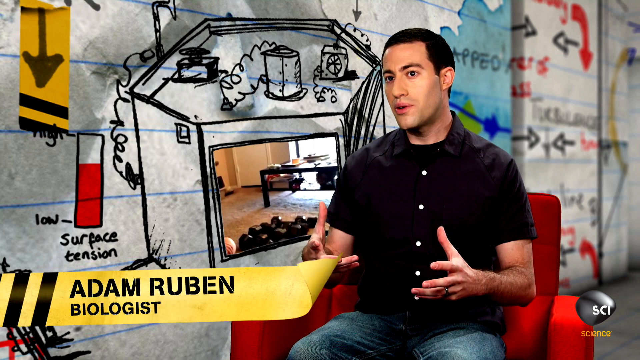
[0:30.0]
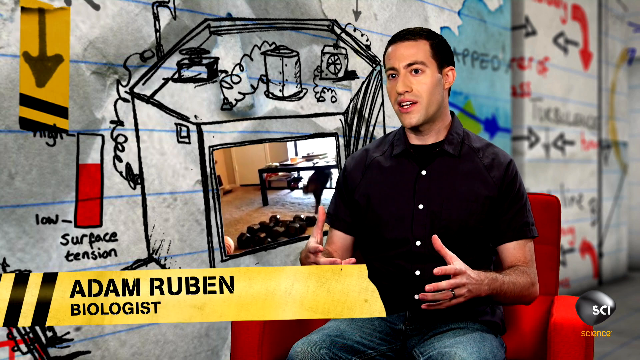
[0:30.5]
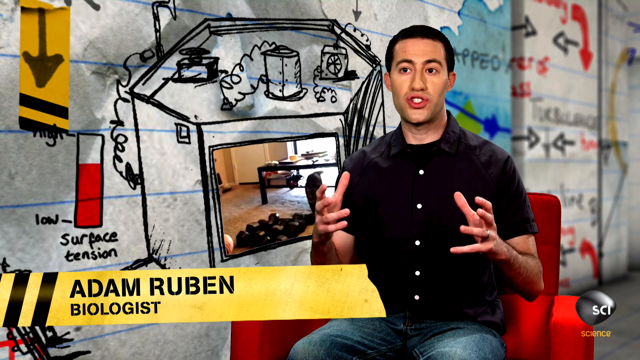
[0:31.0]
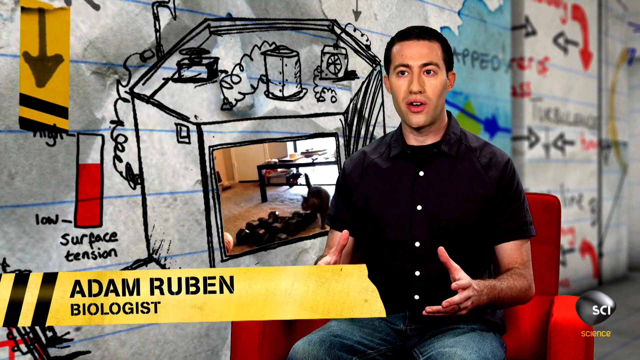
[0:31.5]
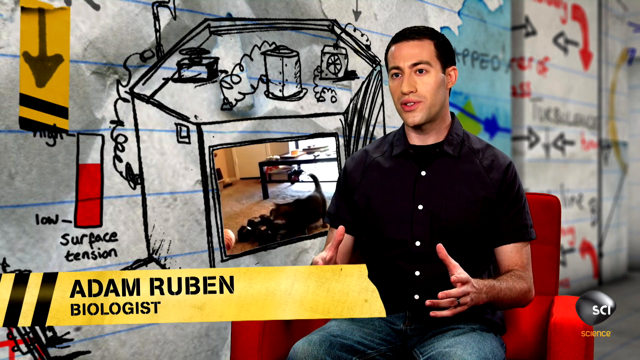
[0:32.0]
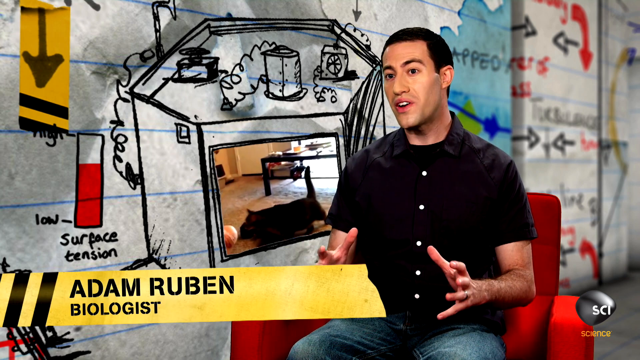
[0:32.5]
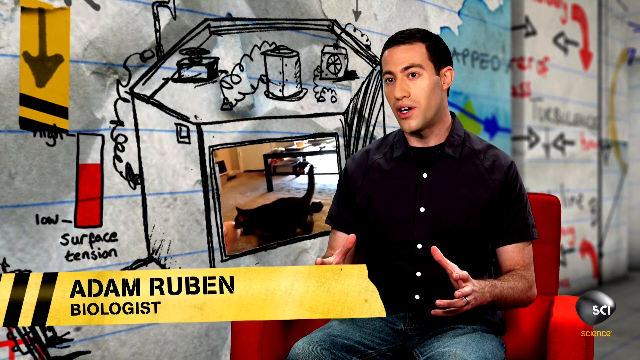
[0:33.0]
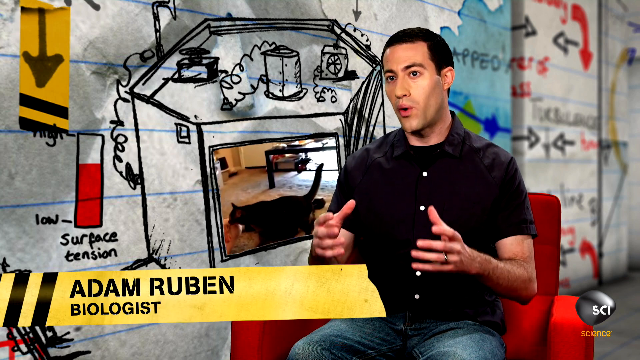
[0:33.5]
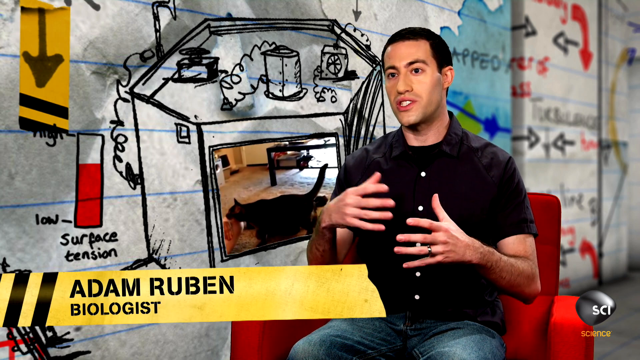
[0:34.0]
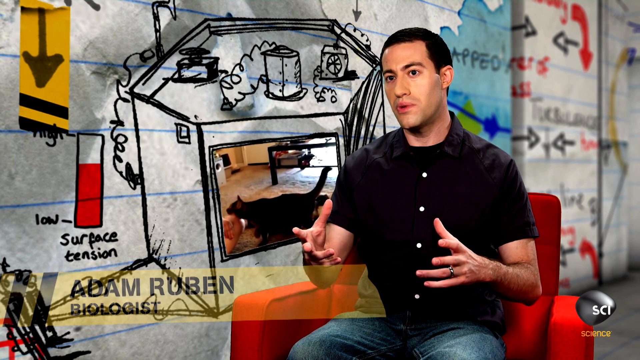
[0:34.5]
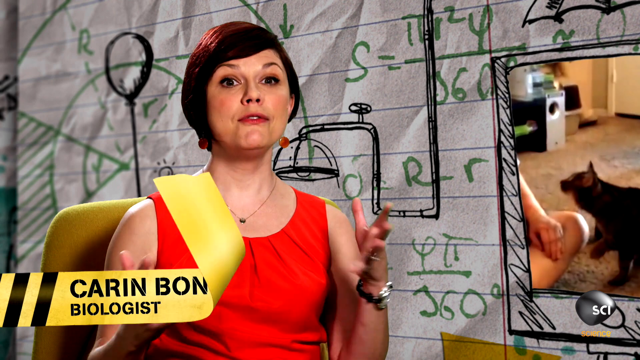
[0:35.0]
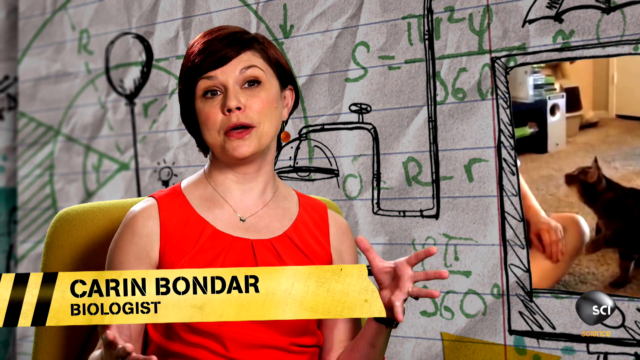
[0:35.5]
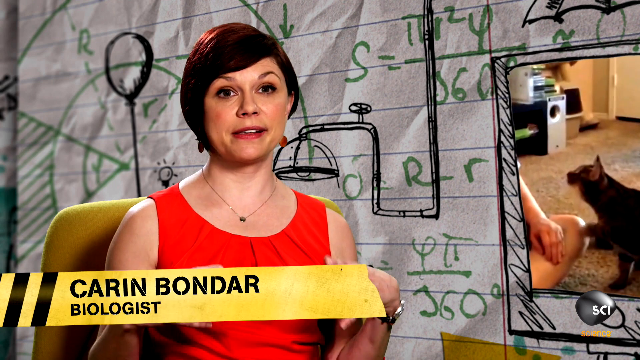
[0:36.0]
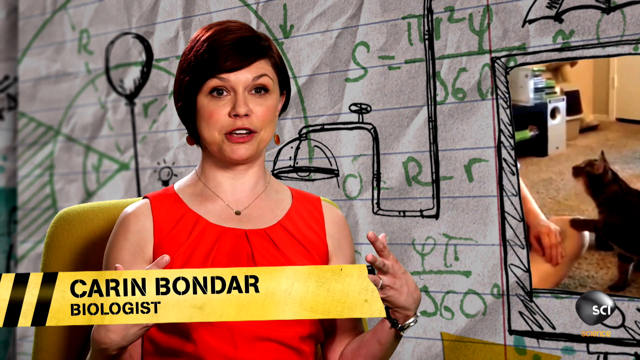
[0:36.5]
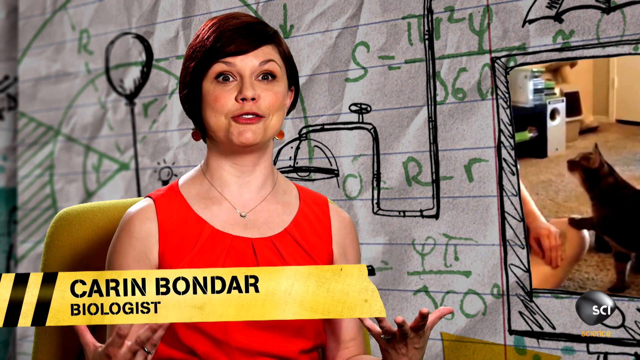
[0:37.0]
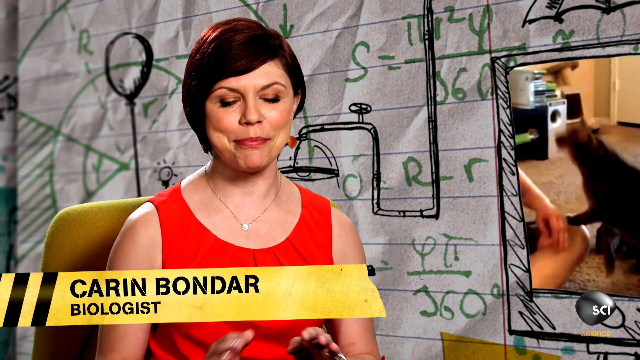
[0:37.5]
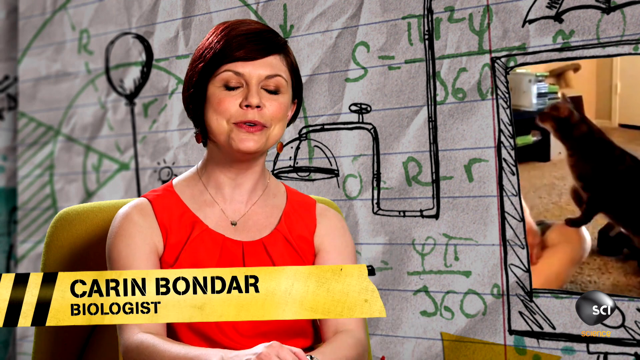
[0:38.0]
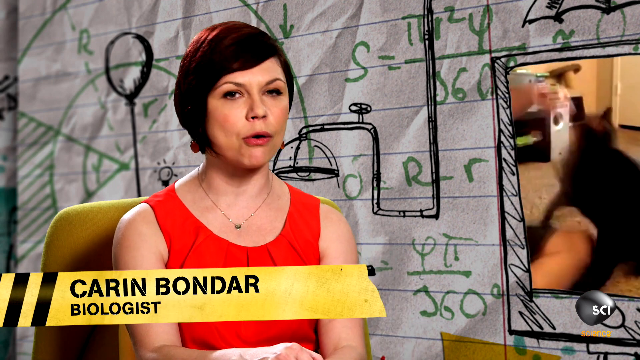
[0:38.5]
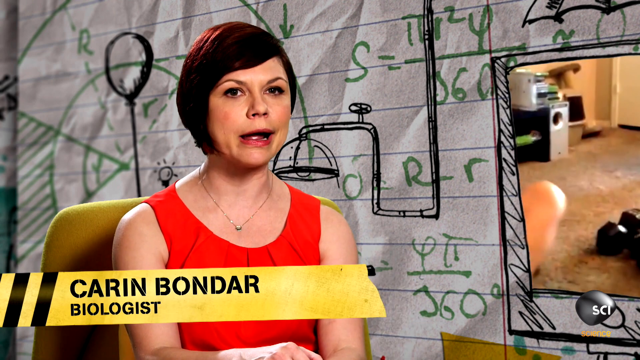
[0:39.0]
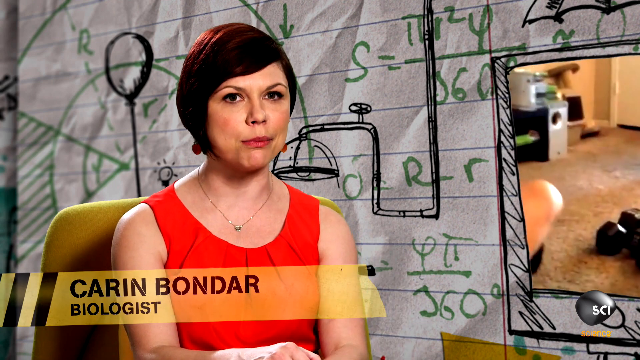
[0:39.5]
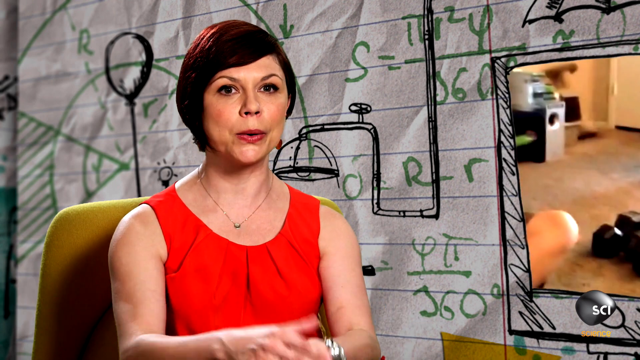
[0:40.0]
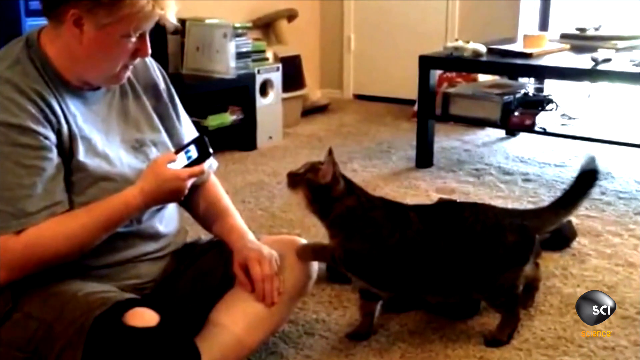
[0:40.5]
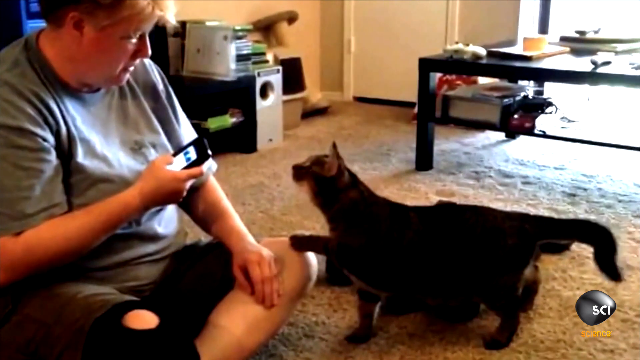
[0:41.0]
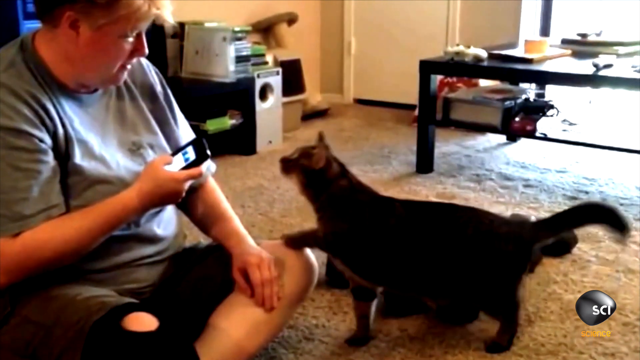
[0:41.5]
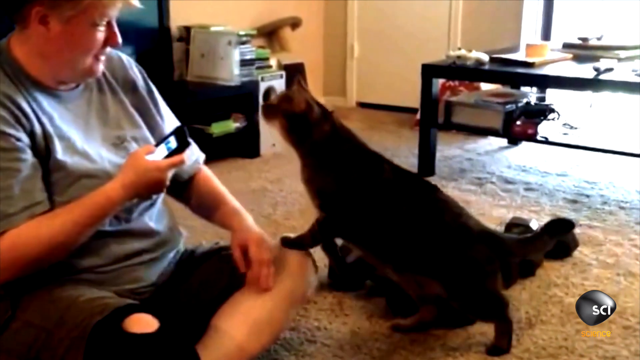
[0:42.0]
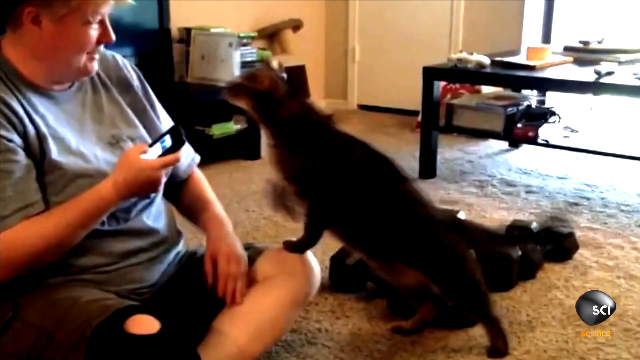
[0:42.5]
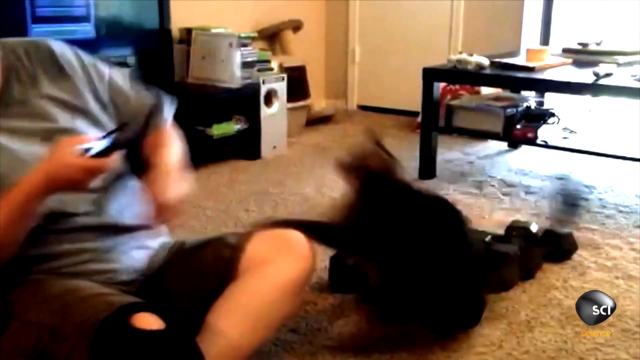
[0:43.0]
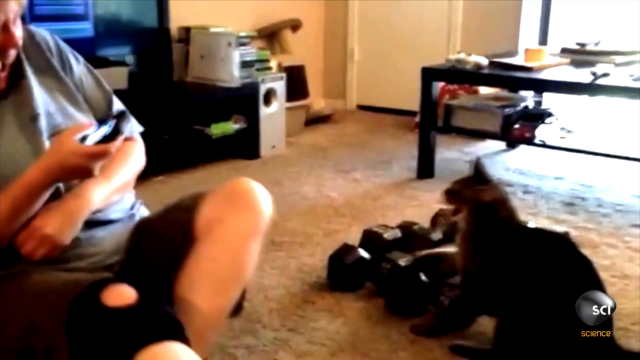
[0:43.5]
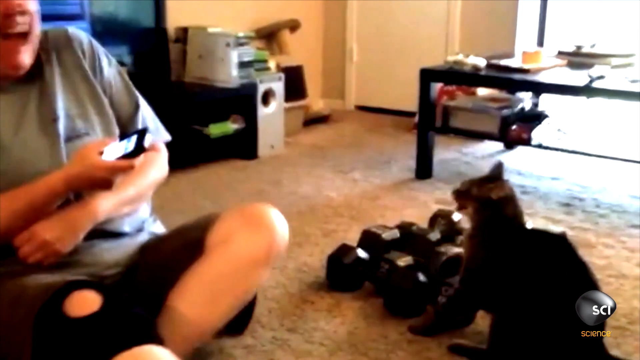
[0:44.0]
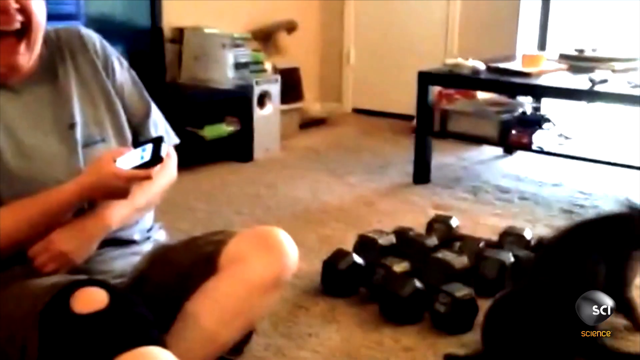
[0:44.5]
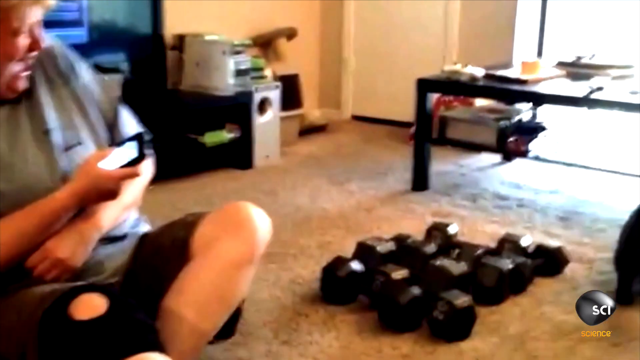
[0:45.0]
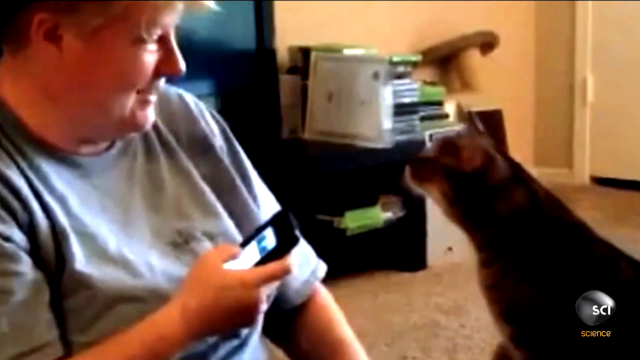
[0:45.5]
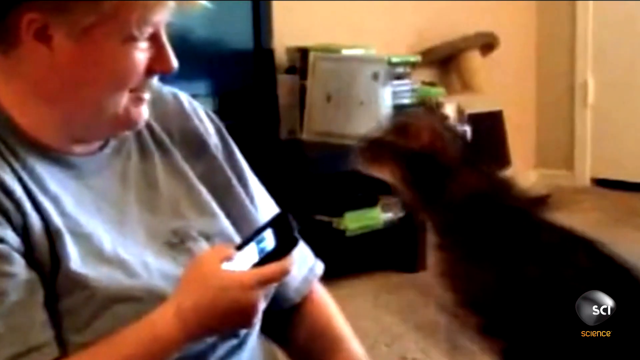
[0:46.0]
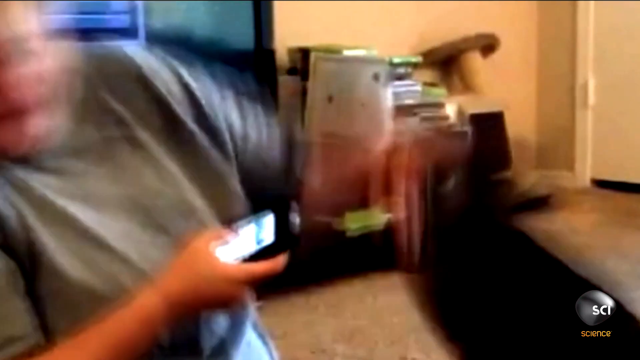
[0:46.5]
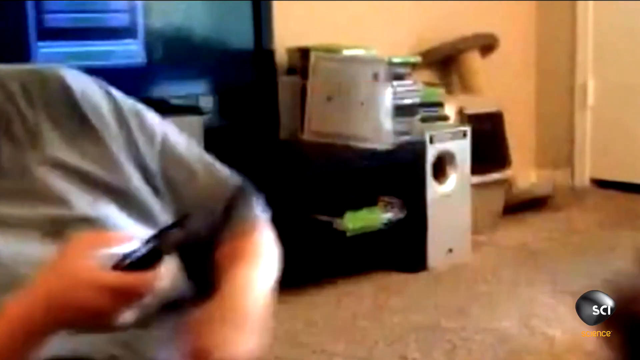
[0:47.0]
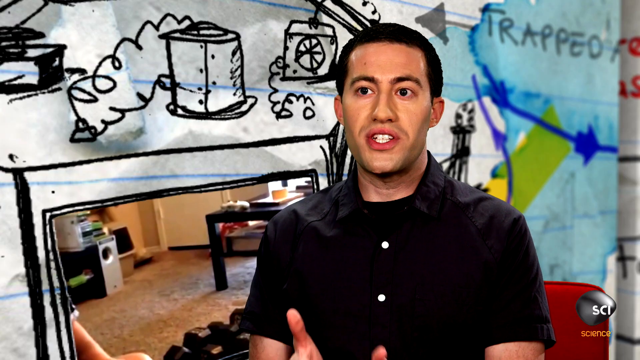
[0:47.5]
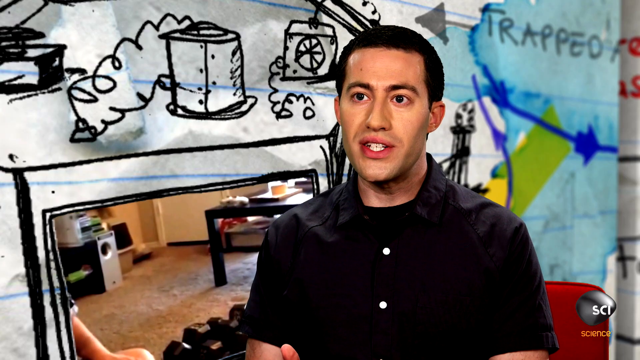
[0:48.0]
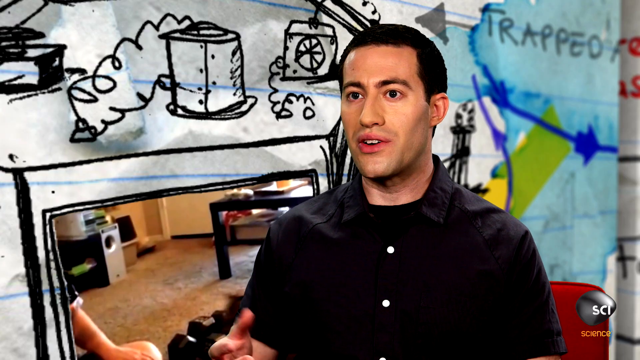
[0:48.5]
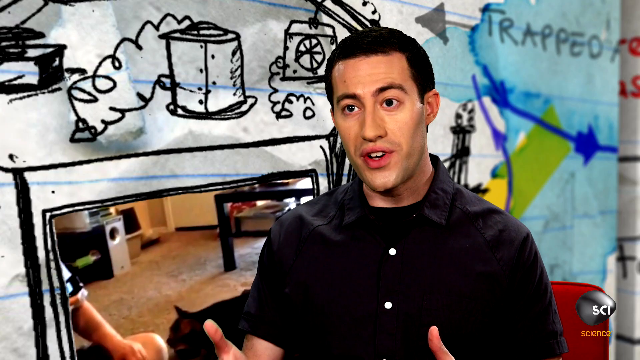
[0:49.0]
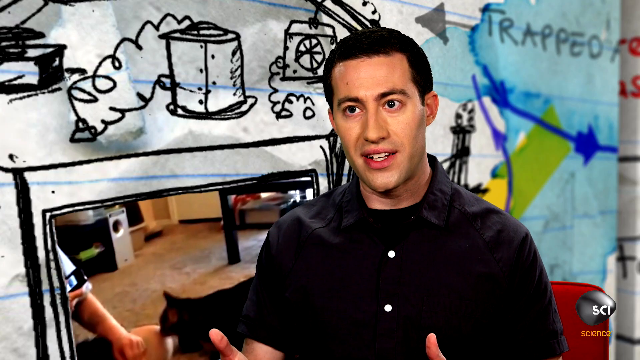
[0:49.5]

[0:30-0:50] Experts are weighing in on the footage. The first commentator here is named Adam Ruben; he has short black hair and dark brown eyes and wears a black button-down shirt and jeans. He is apparently commenting on the video of the woman and her cat, gesturing with his hands as he speaks. The video cuts to a woman with shorter, dark brownish-red hair in a red dress, sitting in a yellow chair, named Carin Bondar and identified as a biologist. She looks disapproving as the video plays in the background, nodding her head now and then, with a furrowed brow and a concerned look. The video cuts back to the footage of the woman and her cat, at the point where she activates the app and the cat climbs up on her and slaps her. She then appears to laugh hysterically, and the video zooms in on her reaction after the attack. It then cuts to more commentary from the expert, who appears to be explaining the situation and looks concerned and maybe a little disappointed.